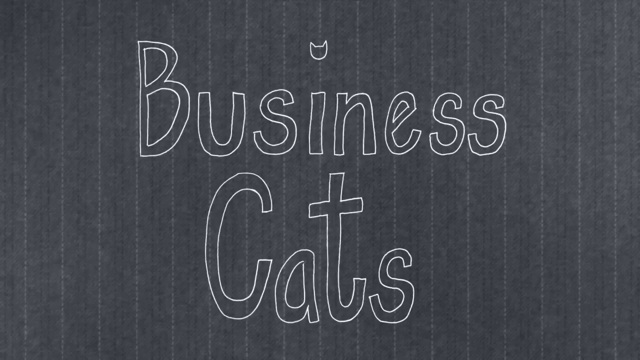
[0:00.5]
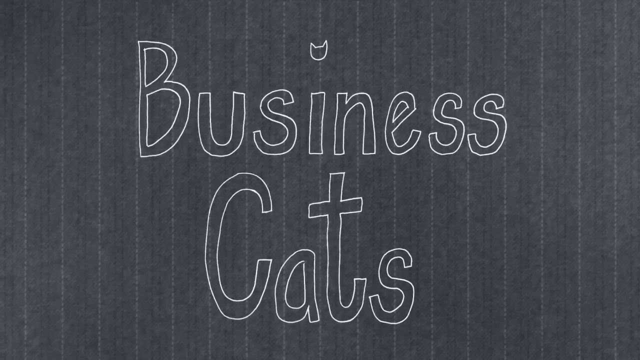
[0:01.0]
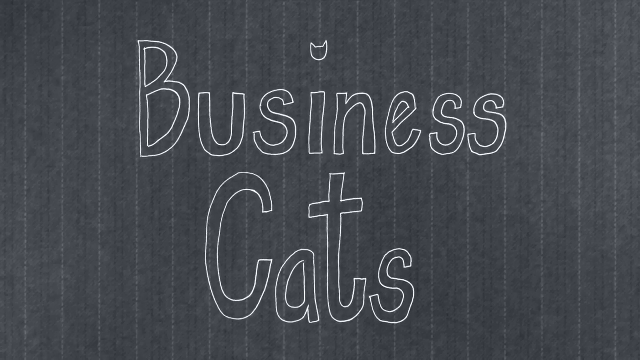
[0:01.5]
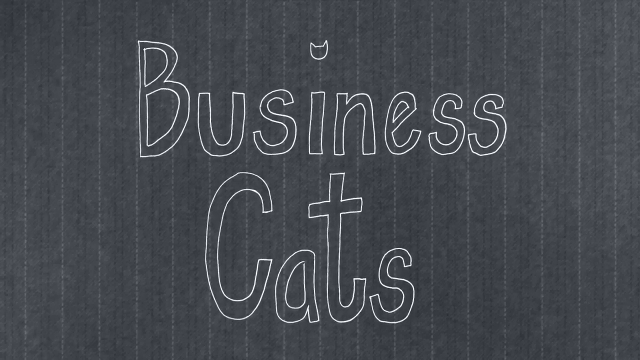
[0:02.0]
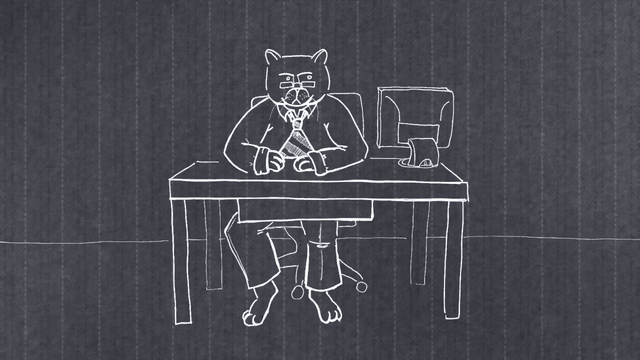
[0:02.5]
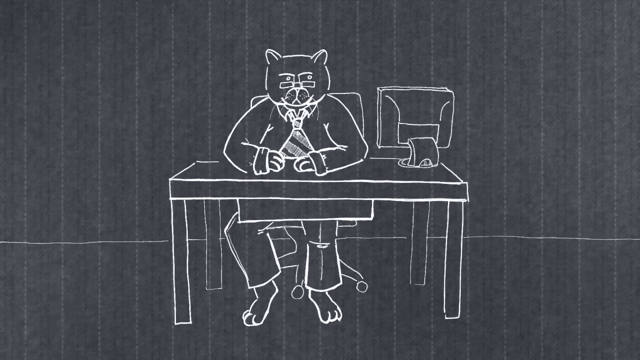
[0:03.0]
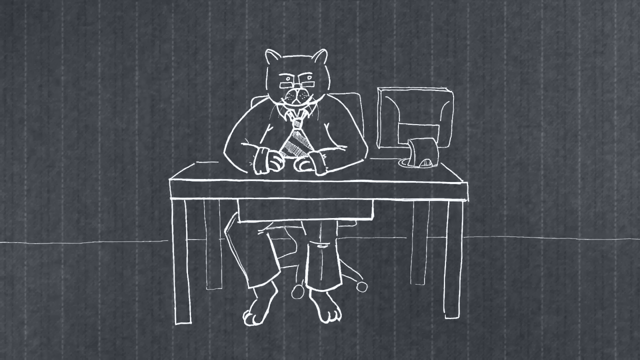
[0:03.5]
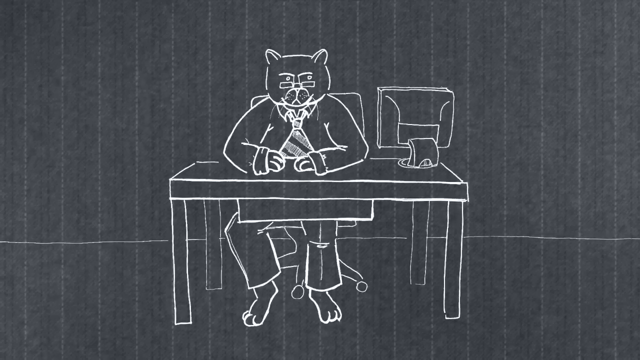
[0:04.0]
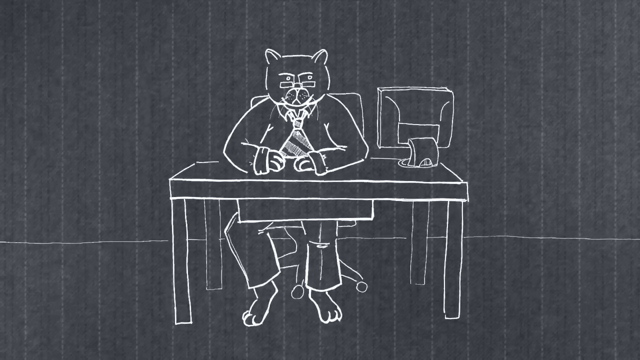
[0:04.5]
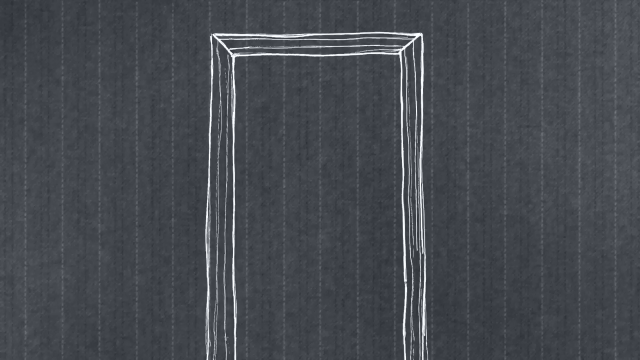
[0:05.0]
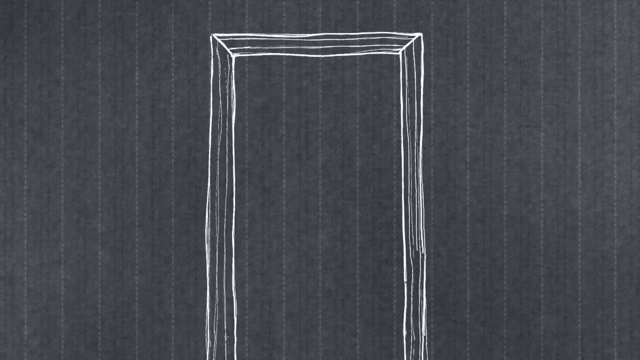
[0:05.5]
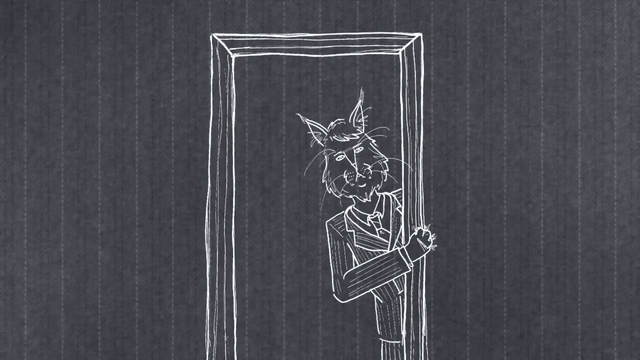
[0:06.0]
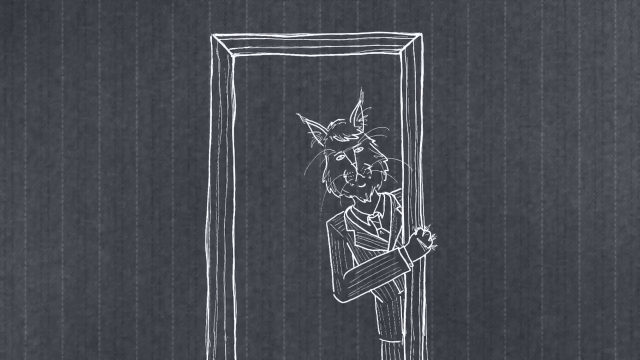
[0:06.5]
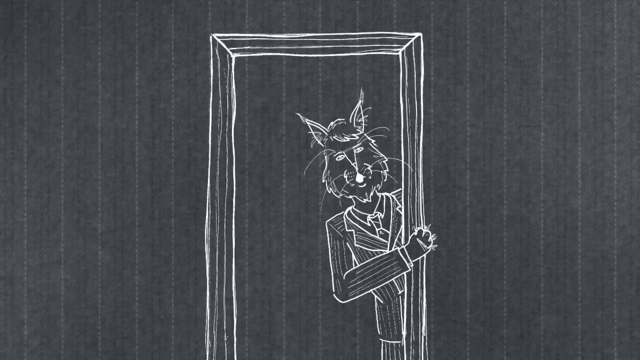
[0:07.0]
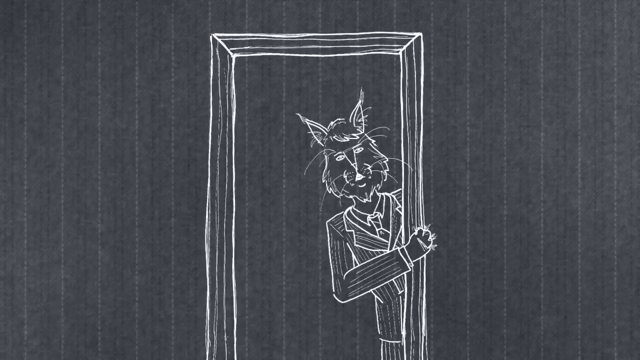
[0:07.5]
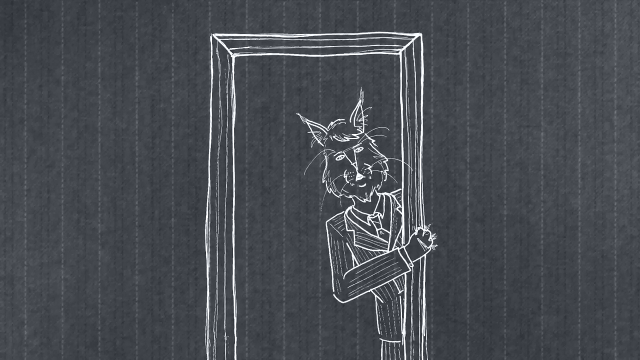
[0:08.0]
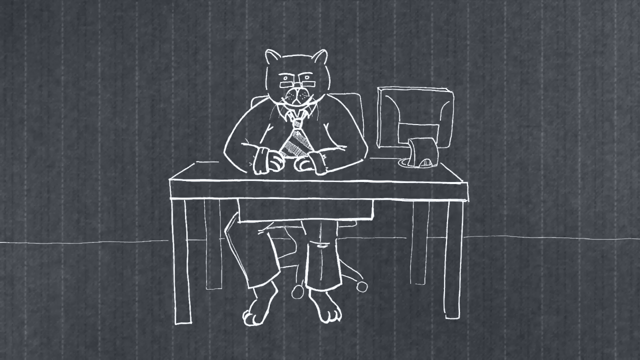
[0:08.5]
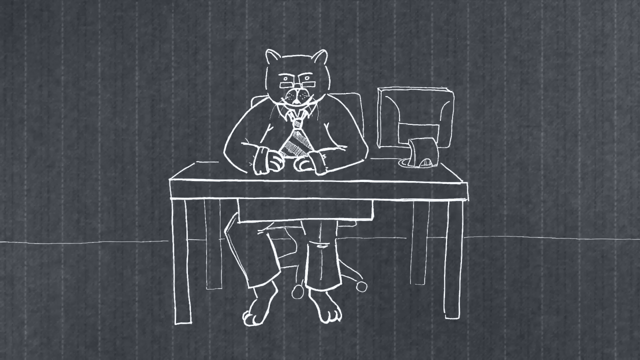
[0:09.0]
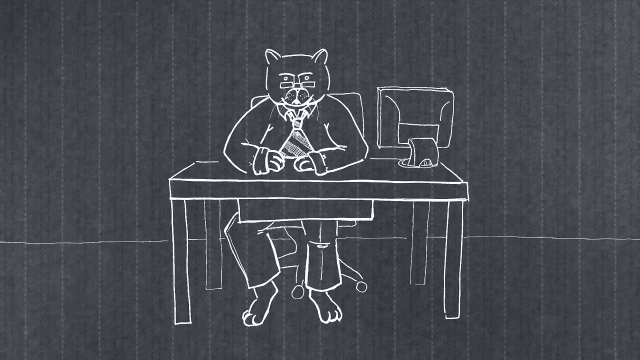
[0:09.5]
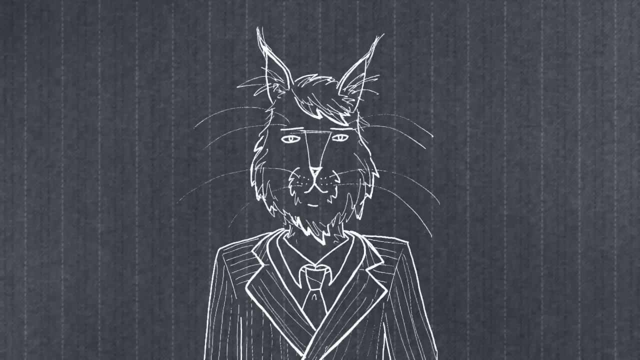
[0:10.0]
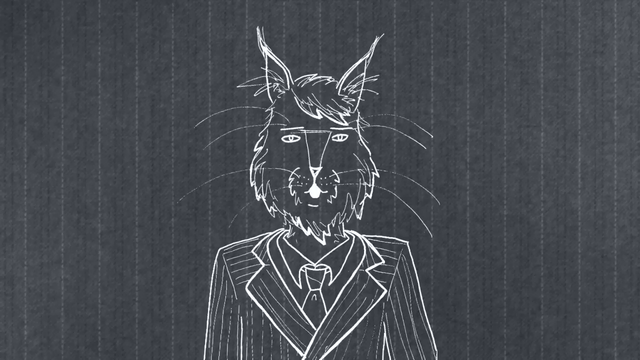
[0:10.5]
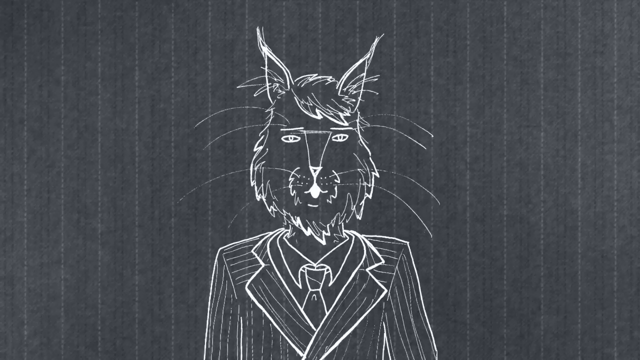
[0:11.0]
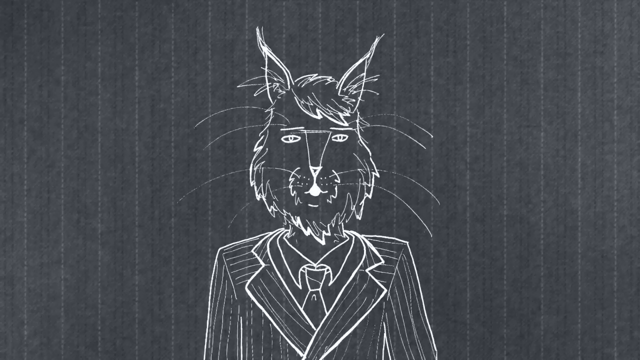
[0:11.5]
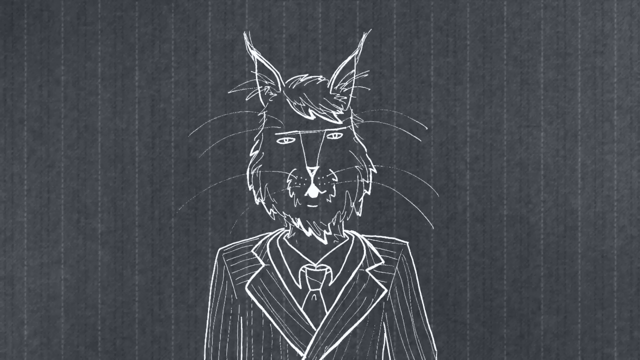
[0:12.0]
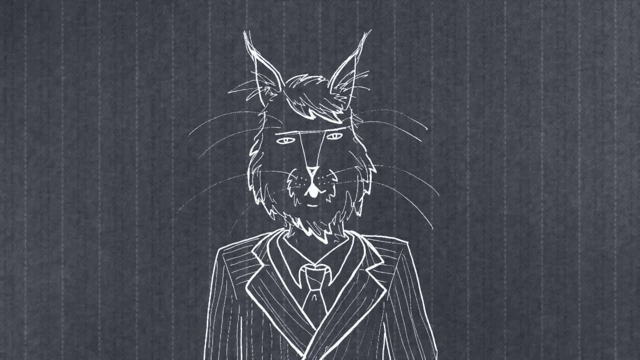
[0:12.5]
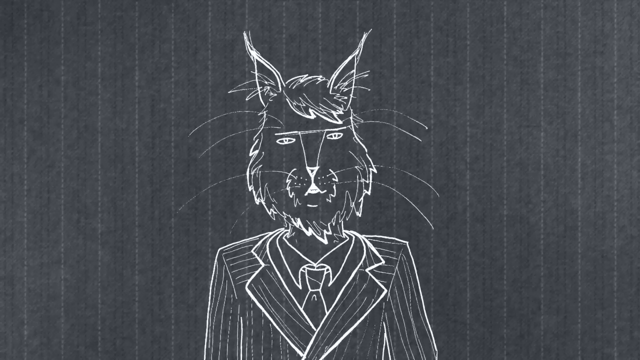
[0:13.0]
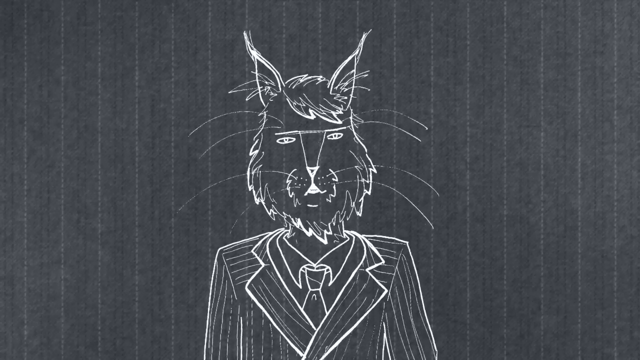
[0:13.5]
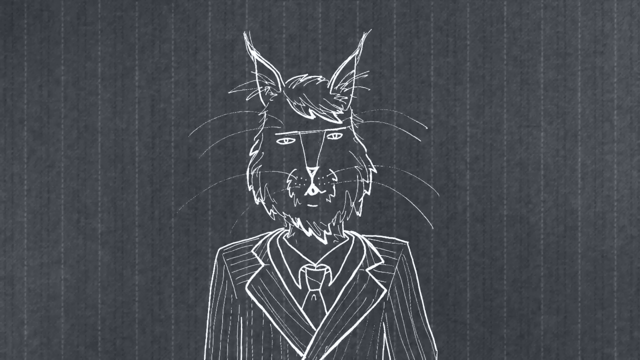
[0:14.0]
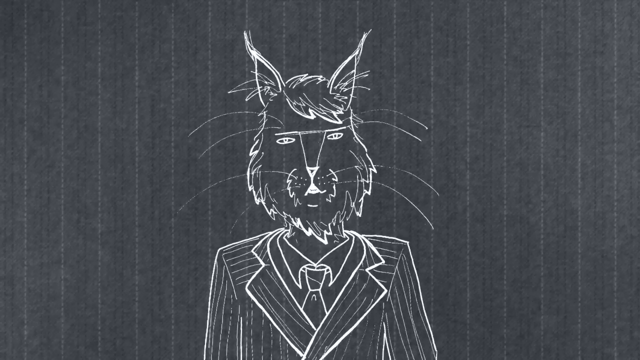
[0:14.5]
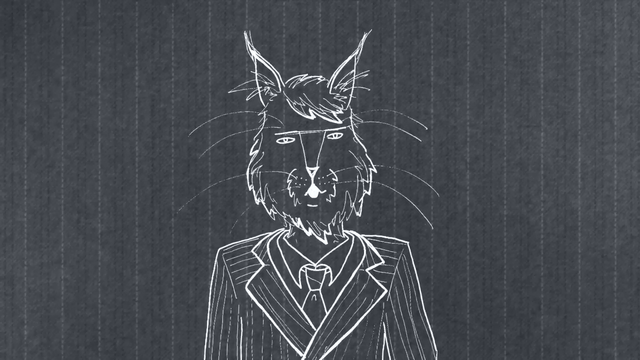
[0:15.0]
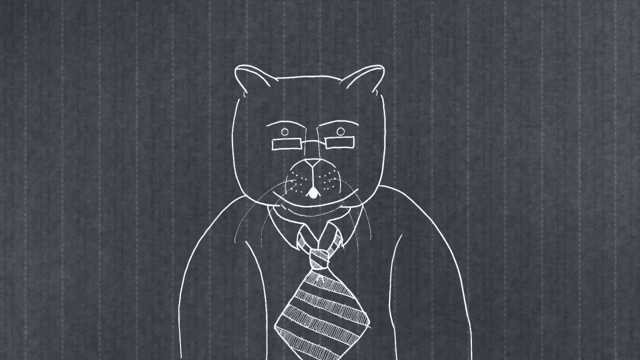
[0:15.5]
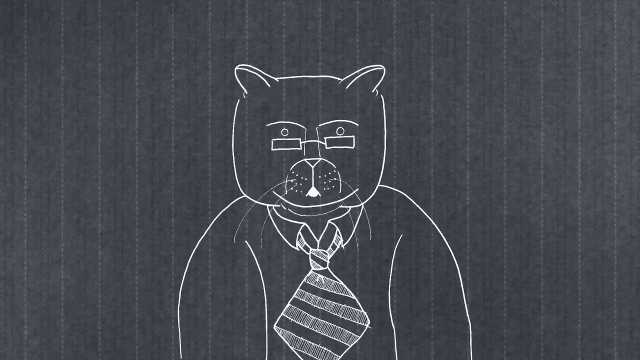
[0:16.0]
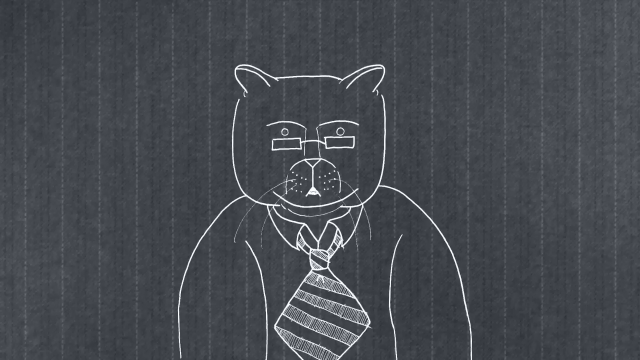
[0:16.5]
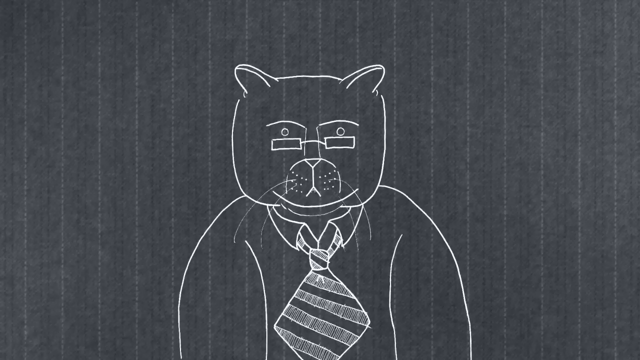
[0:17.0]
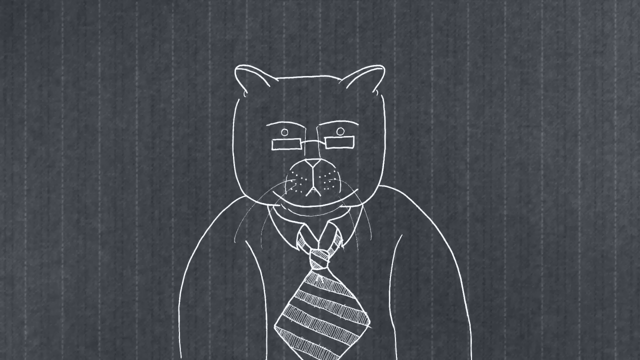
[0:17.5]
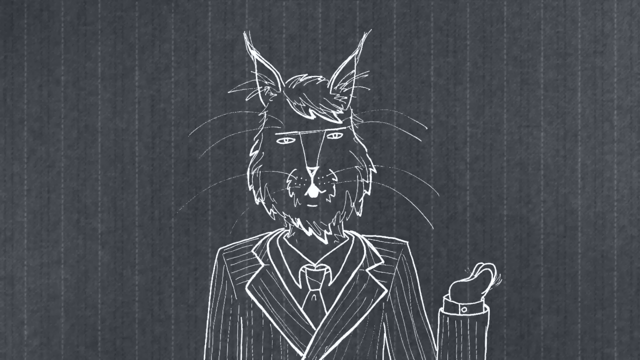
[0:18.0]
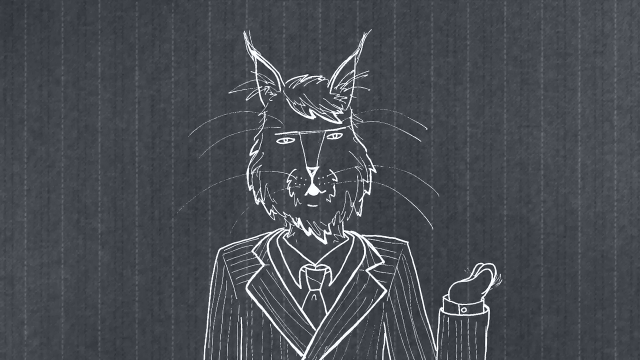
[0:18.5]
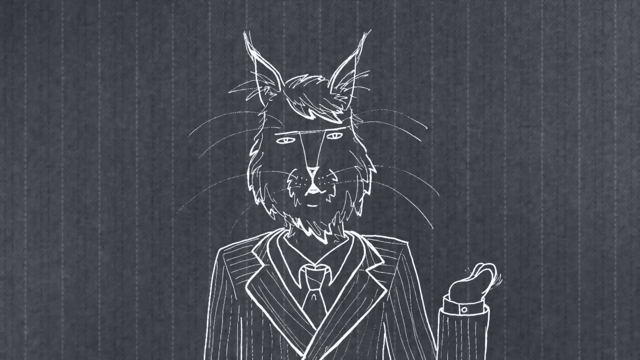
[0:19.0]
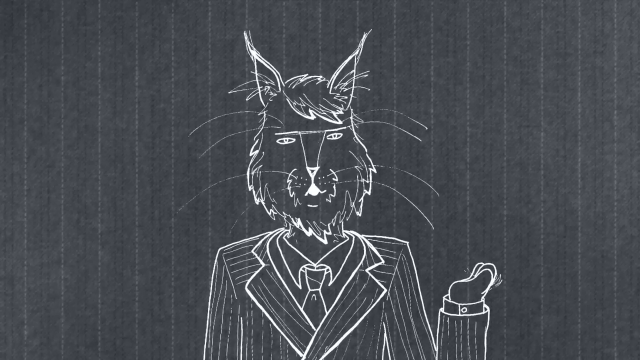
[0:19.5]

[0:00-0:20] This short animation is titled "Business Cats," and the title appears at the beginning. The dot over the i looks like the outline of a cat's face with pointy ears. The figures are drawn only in white lines against a gray background. The background has faint white lines running through it that make it look almost like a type of fabric, with a texture that almost looks like wool. The cats look human, with legs and arms, and wear business suits in a business setting. In the first scene, a cat wearing a tie sits behind a desk with a computer monitor next to him. Another cat in a business suit and tie appears around a doorframe, leaning in and speaking, and the two cats have a conversation. Their mouths appear to move, and that is the only part that moves.